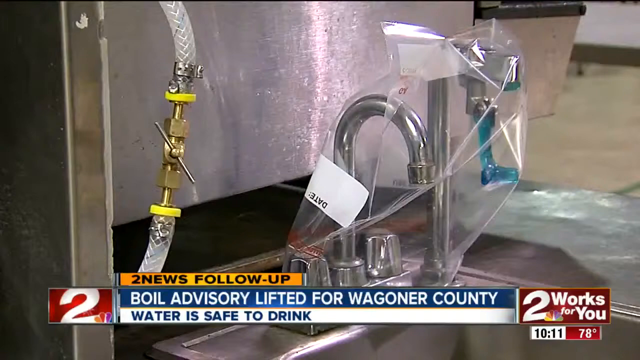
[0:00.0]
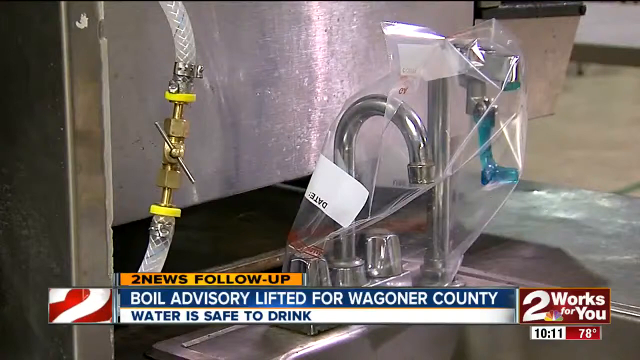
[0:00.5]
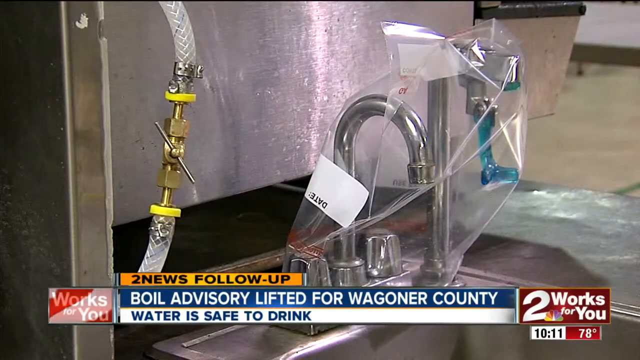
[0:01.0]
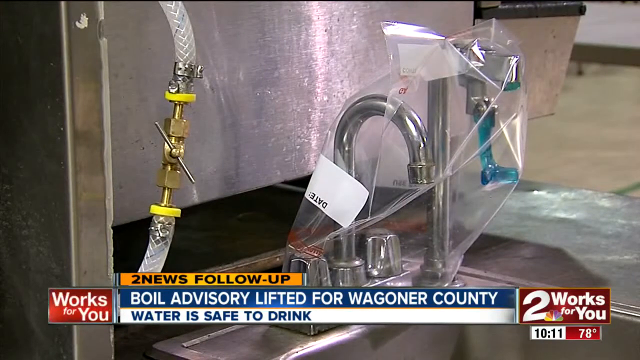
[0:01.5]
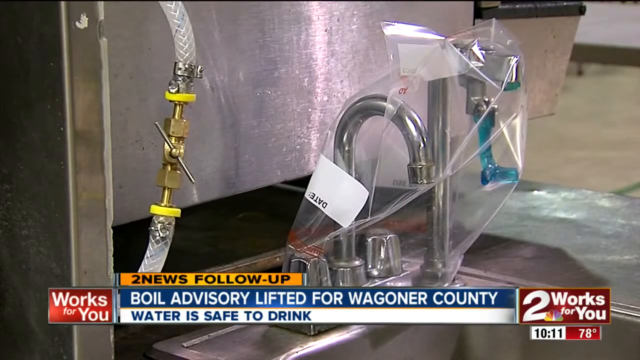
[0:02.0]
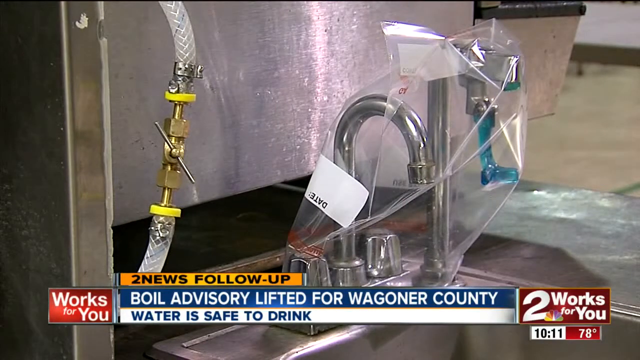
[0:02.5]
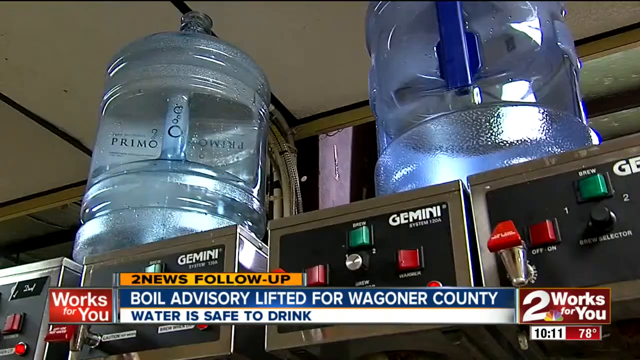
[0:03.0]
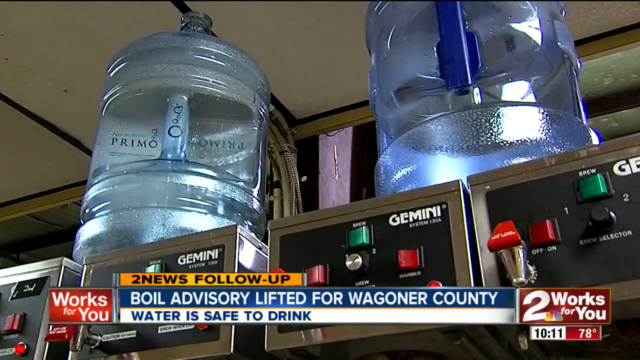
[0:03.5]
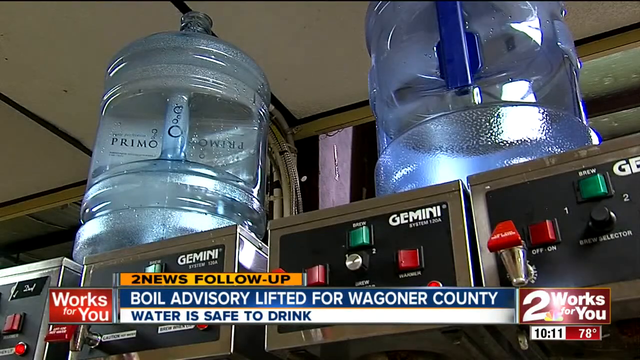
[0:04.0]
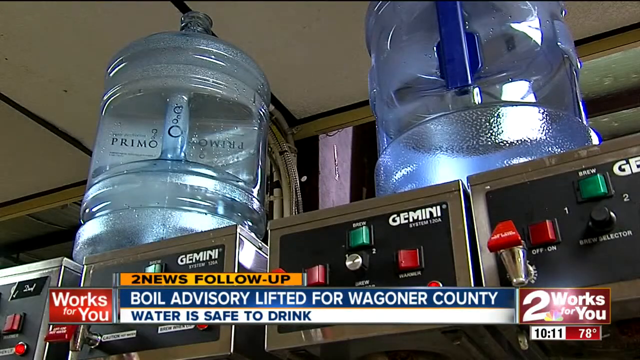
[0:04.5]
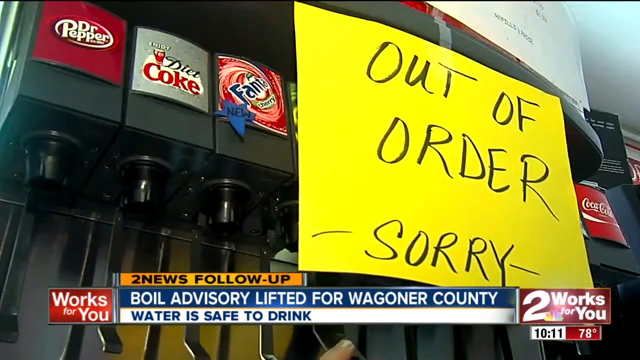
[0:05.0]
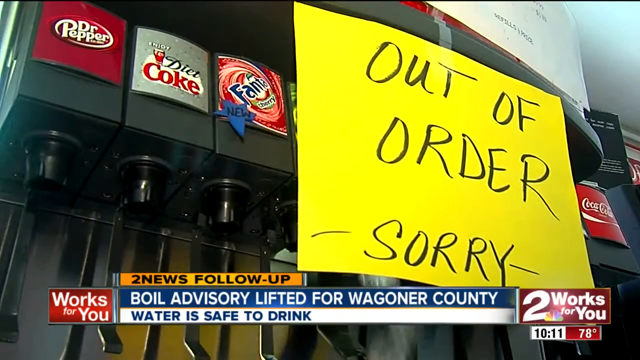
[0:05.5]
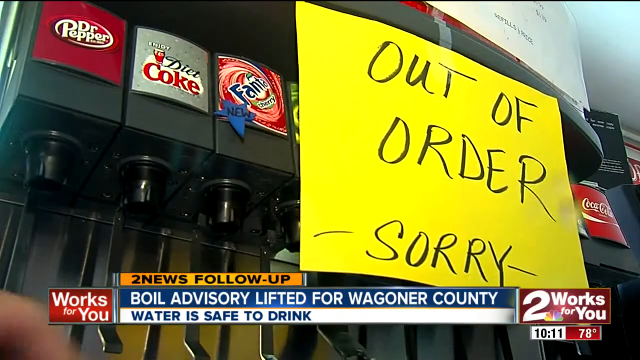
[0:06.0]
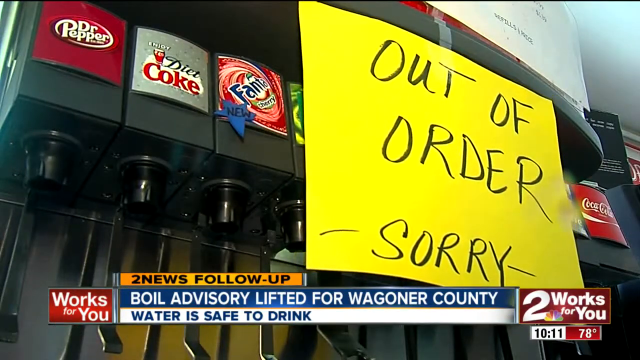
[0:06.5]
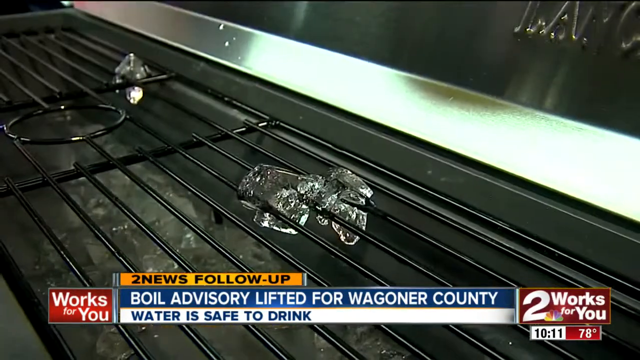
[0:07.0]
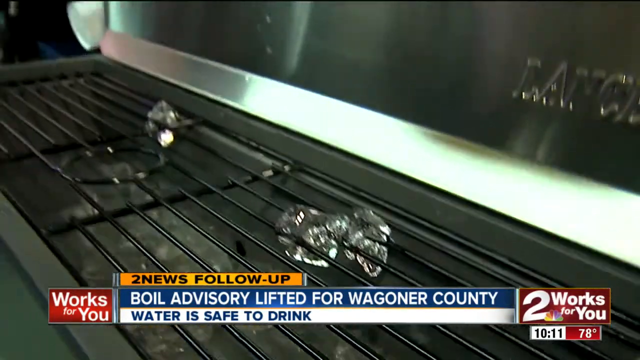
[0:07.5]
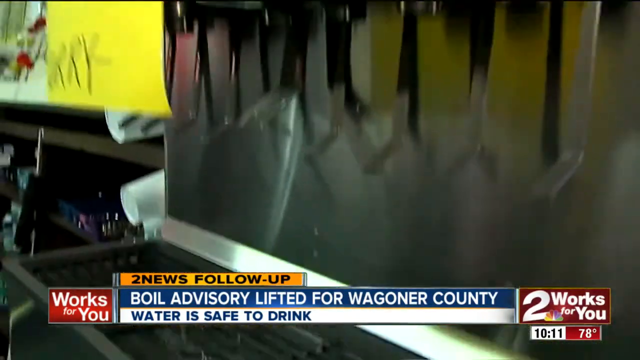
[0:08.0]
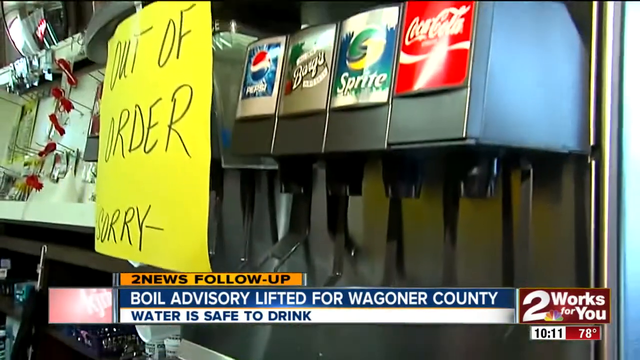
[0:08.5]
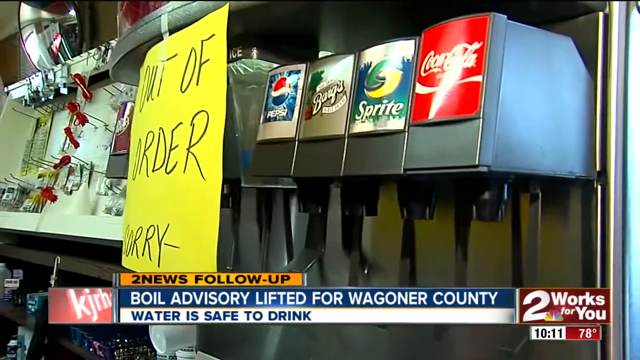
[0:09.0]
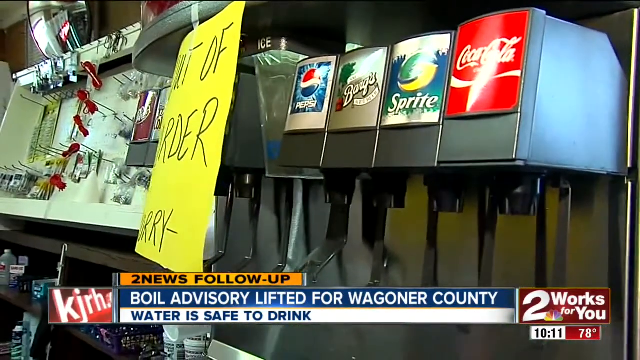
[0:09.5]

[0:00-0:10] A faucet is shown, with another section next to it where there appears to be something white. Text underneath the image reads "boil advisory listed for Wagner County, water is safe to drink." Another image shows water jugs that look like they are sitting on top of coffee machines. Next is a soda machine offering Dr. Pepper, Diet Coke, Fanta and other drinks. A big yellow sign taped to the machine reads "out of order sorry" in black words on yellow paper. The video then cuts to the spot where the ice drops down from the machine, where everything kind of drains.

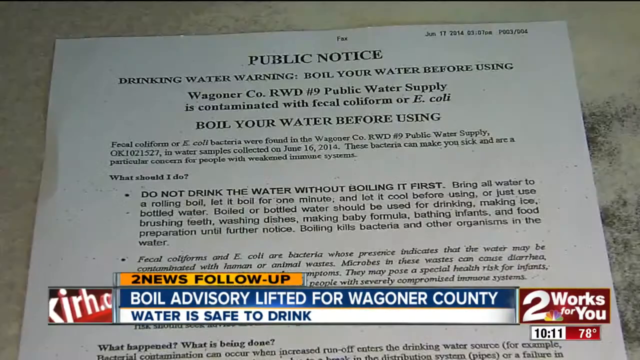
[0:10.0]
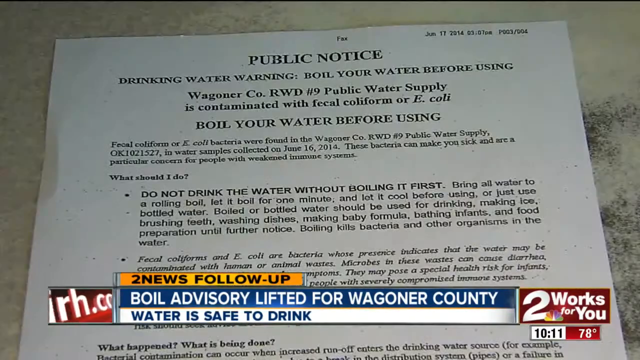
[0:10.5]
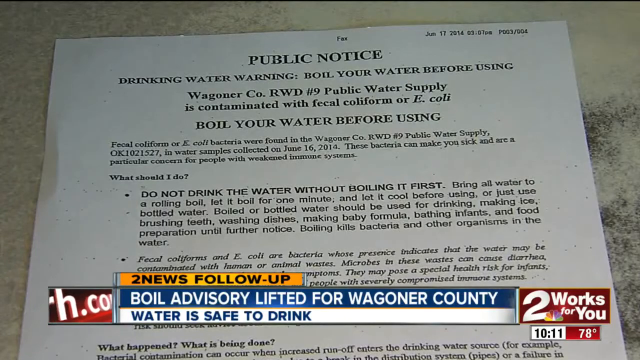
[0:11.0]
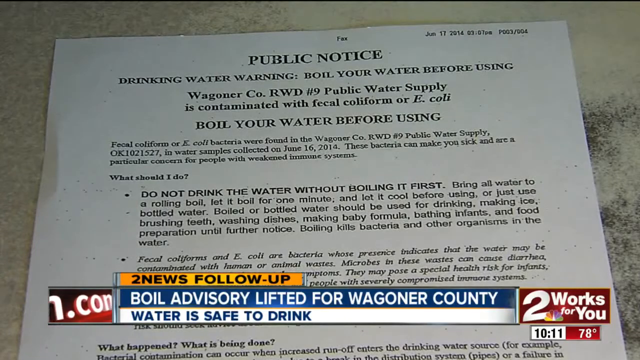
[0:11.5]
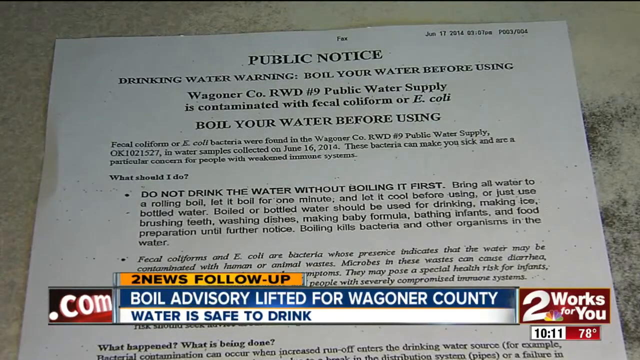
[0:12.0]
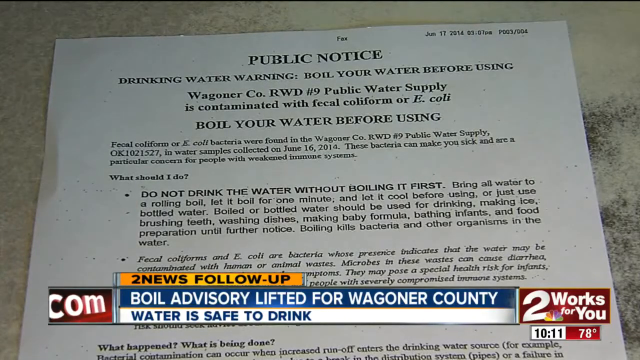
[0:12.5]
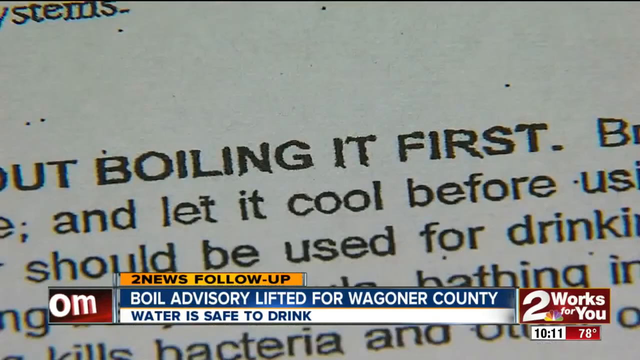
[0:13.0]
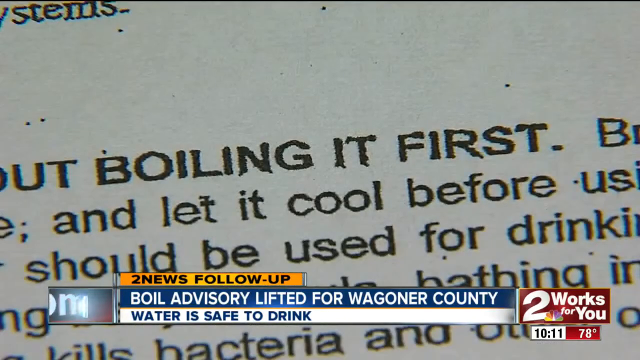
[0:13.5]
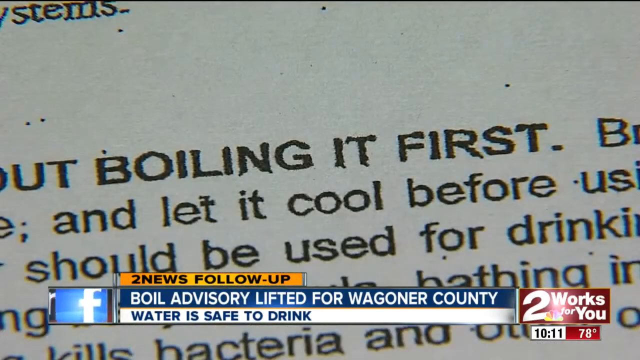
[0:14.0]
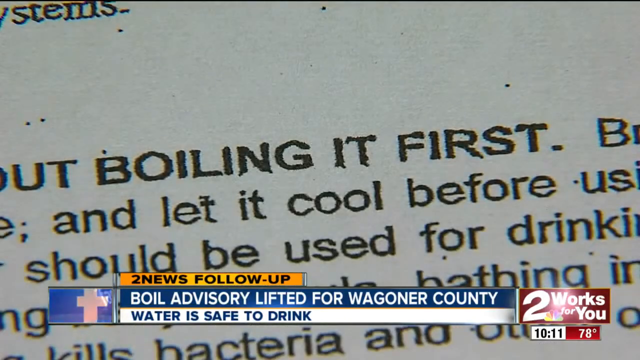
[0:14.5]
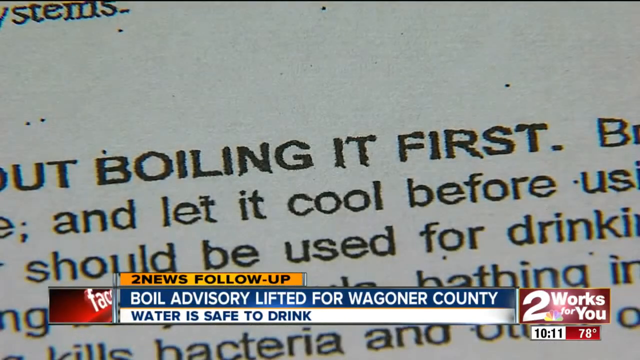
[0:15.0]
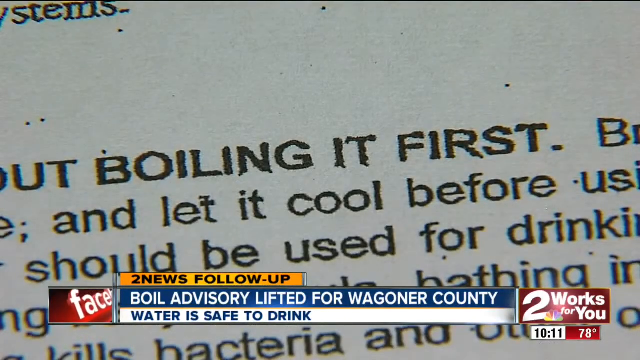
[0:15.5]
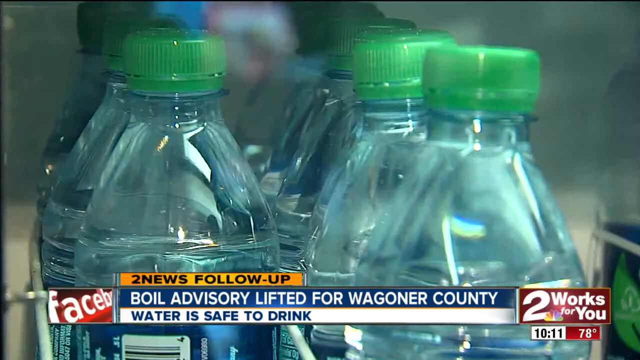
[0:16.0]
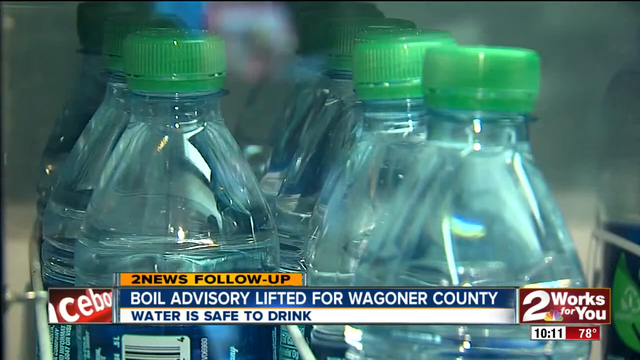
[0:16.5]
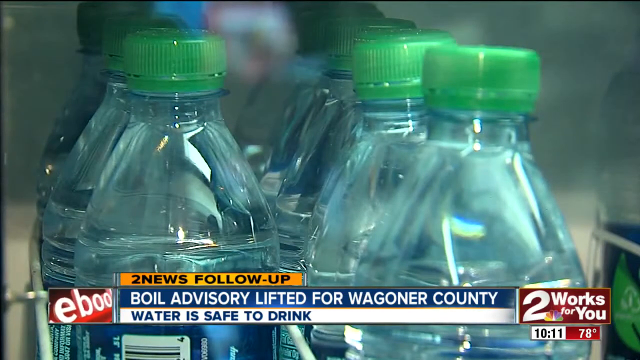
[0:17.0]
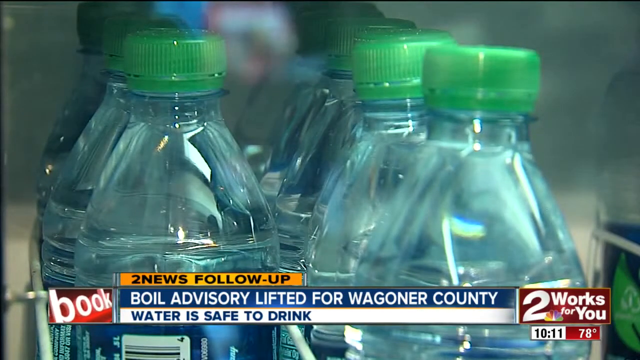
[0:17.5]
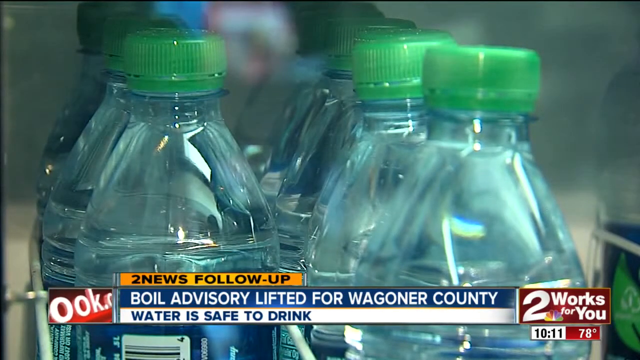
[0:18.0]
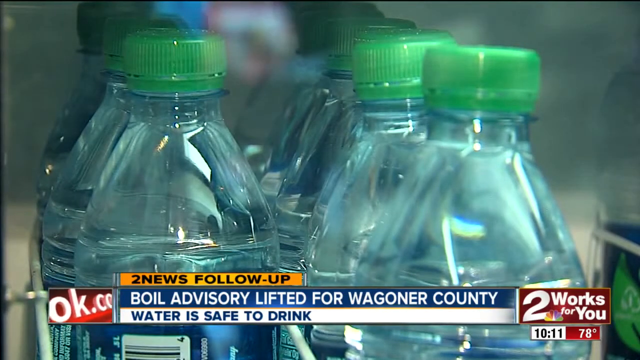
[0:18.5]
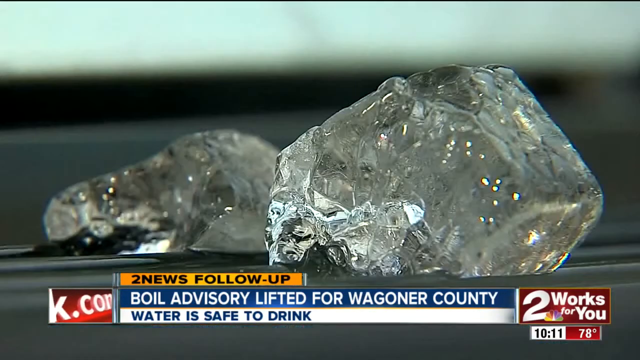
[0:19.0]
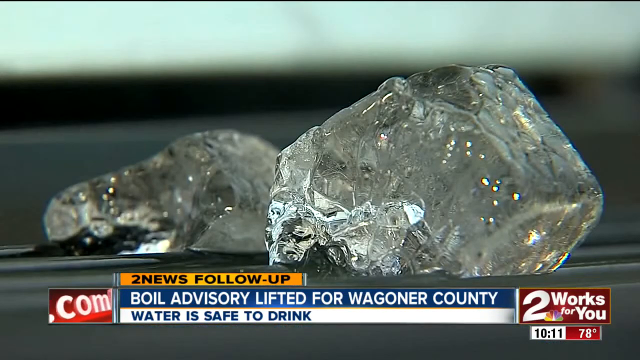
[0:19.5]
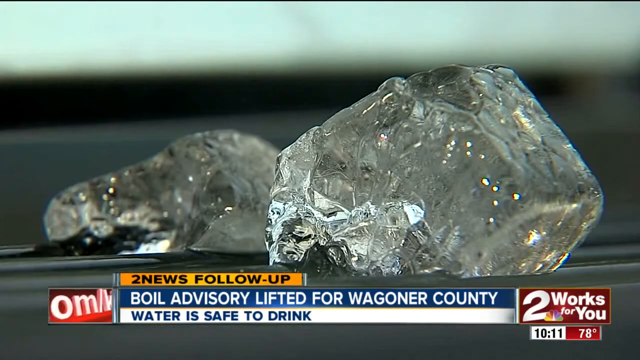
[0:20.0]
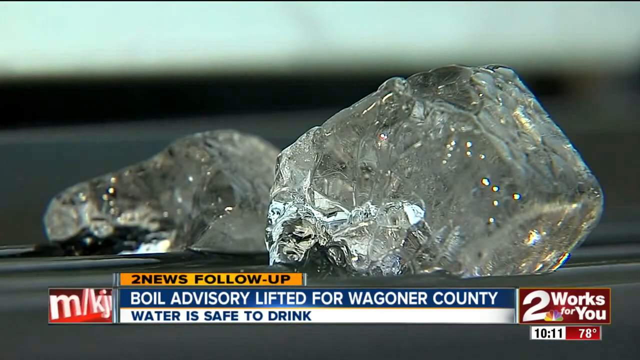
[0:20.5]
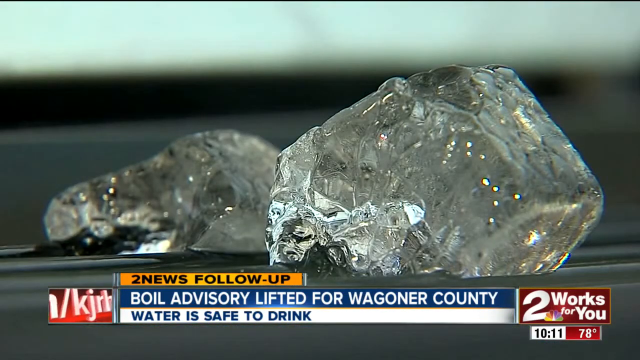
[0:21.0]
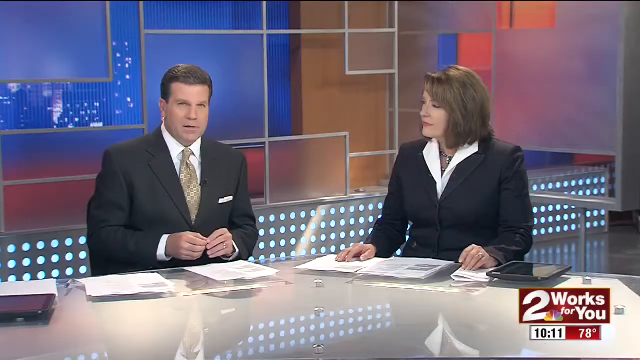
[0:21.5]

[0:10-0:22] A formal piece of paper reads "public notice"; not all of its details are visible, but it looks like it advises boiling water before using it. At the bottom of the screen the banner still reads "boil advisory listed for Wagner County," and to the right of it are the words "two words for you," which appear to be the name of the news station channel. The camera zooms in on the paper, on the part about boiling first. Next is an image of bottled water with three tops; only the tops of the bottles are visible, and there are about seven to eight bottles in the shot.